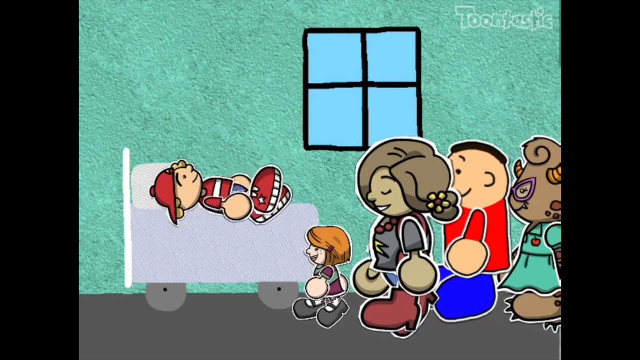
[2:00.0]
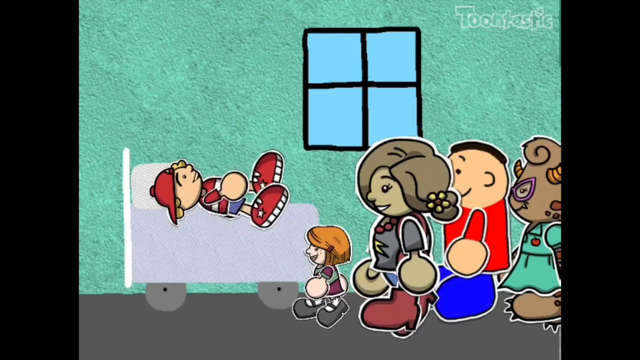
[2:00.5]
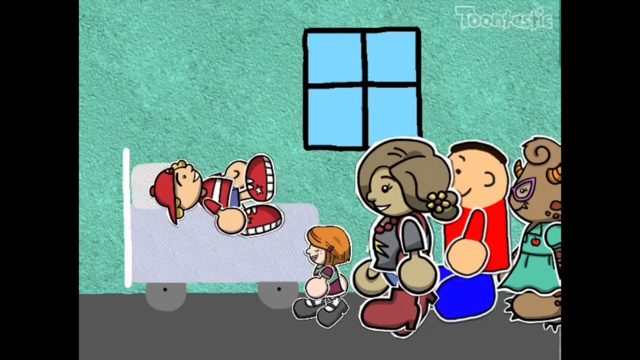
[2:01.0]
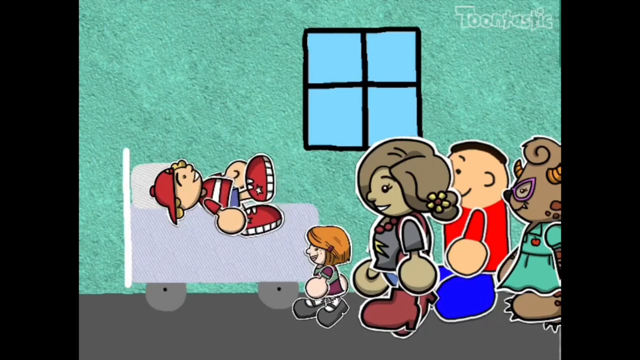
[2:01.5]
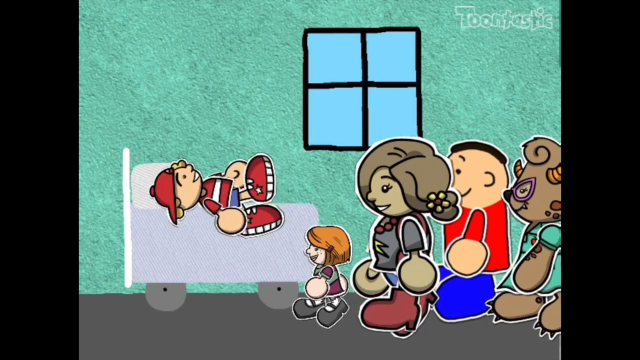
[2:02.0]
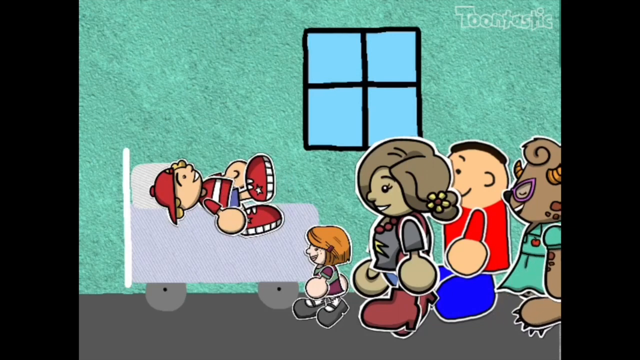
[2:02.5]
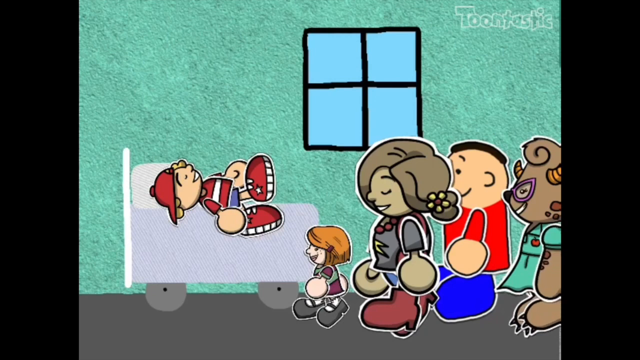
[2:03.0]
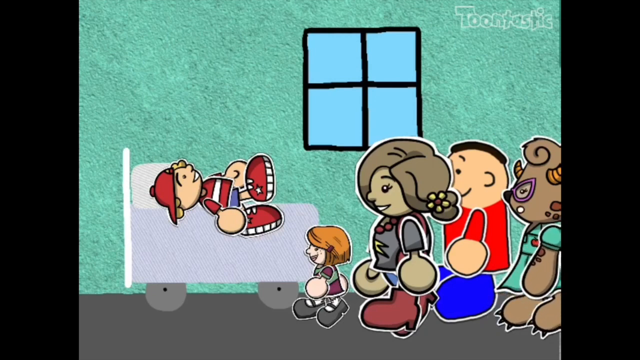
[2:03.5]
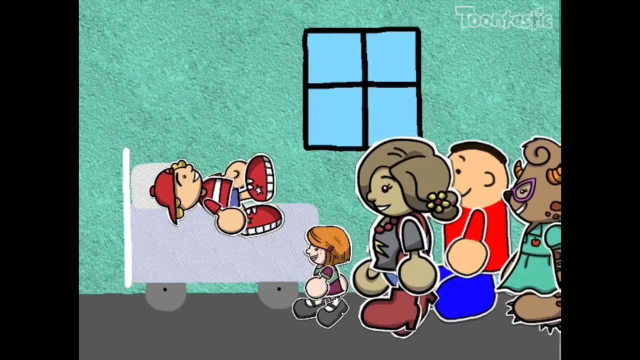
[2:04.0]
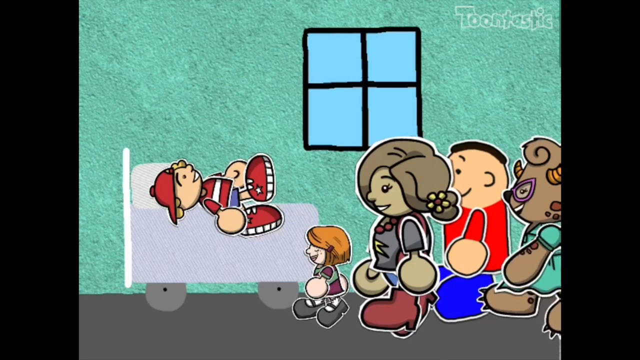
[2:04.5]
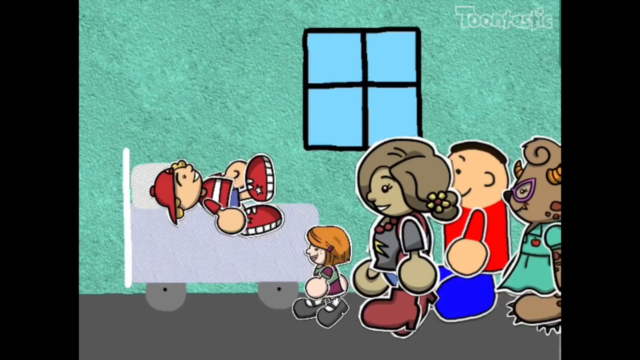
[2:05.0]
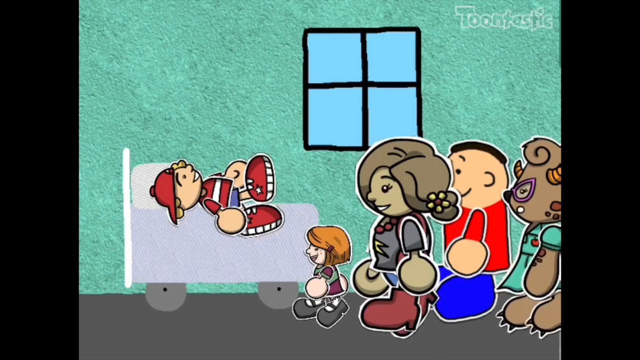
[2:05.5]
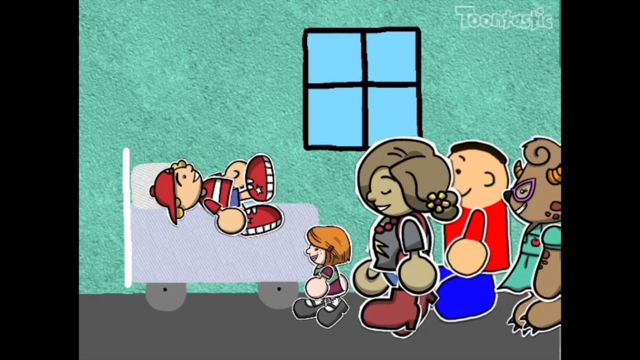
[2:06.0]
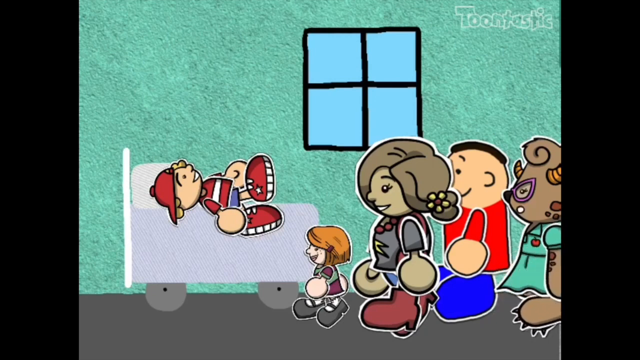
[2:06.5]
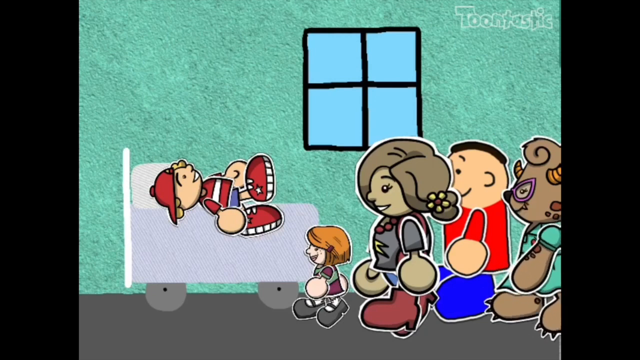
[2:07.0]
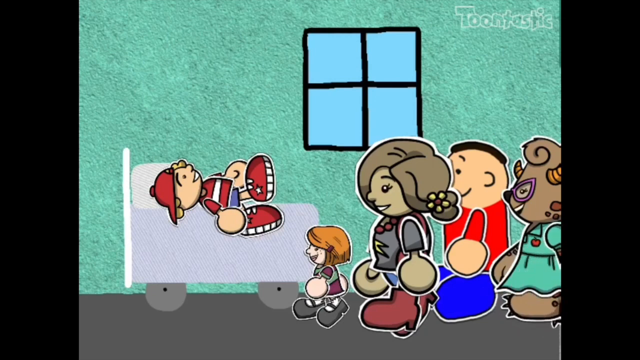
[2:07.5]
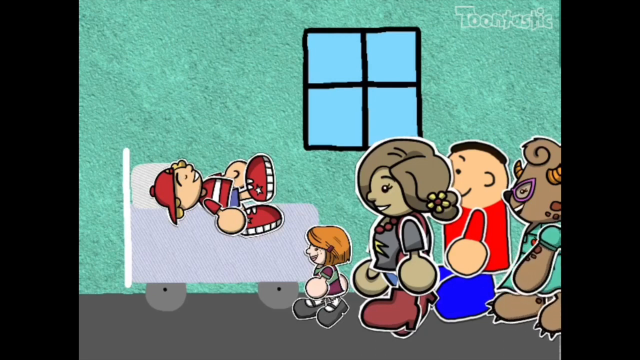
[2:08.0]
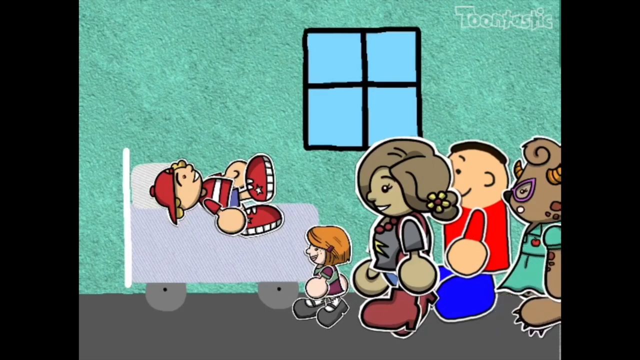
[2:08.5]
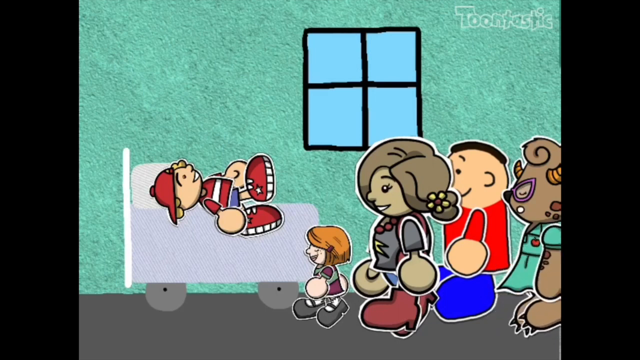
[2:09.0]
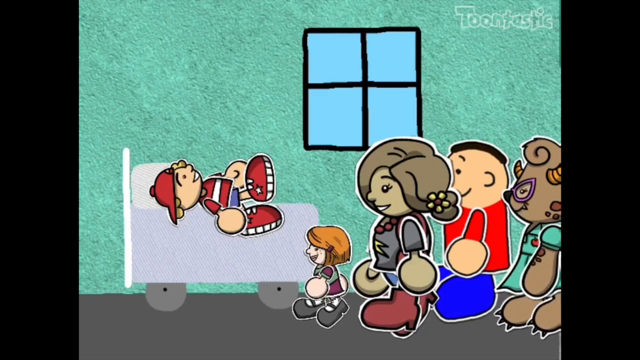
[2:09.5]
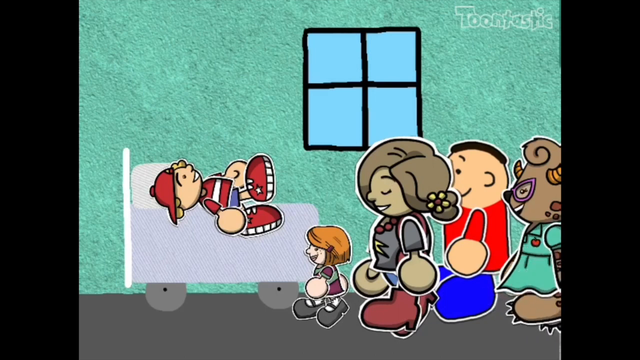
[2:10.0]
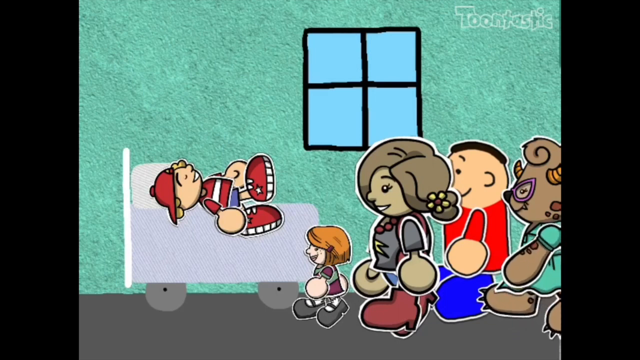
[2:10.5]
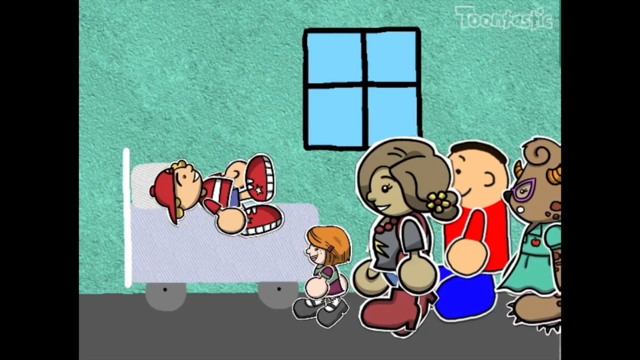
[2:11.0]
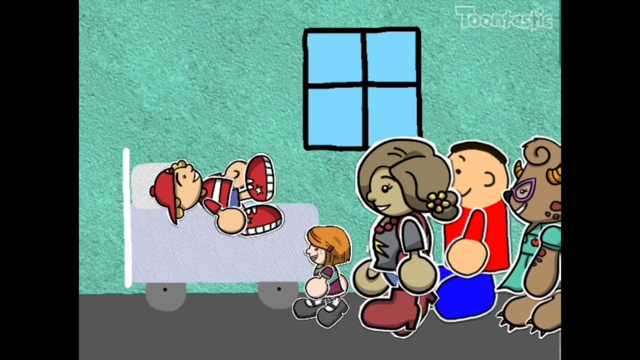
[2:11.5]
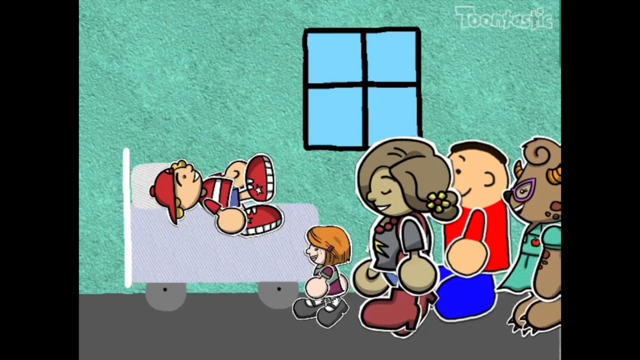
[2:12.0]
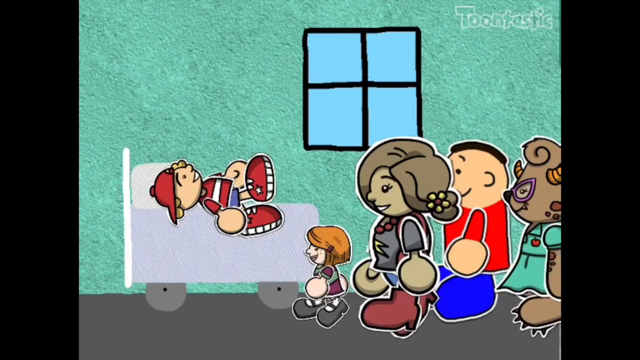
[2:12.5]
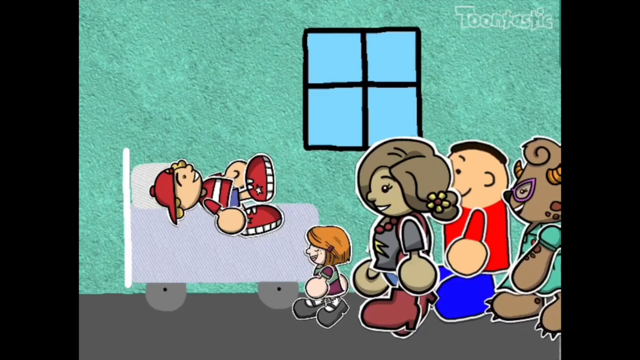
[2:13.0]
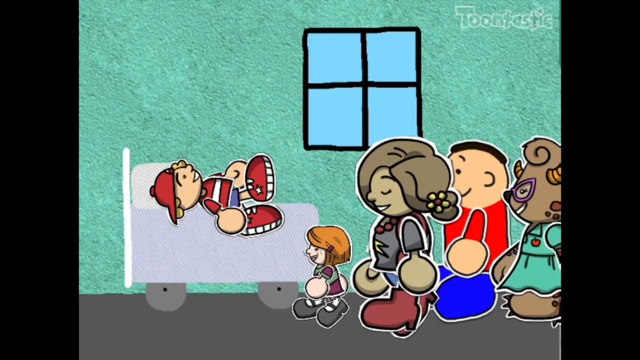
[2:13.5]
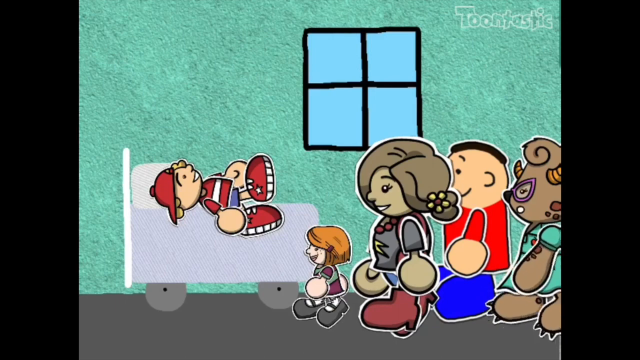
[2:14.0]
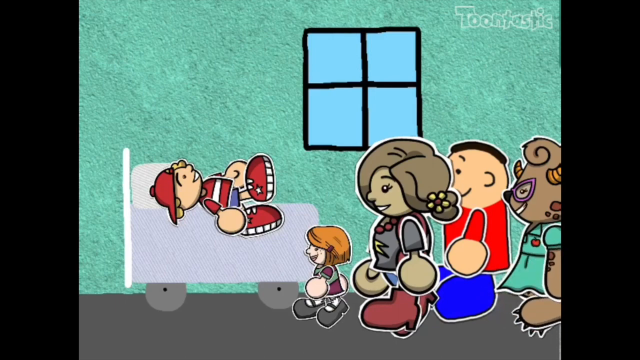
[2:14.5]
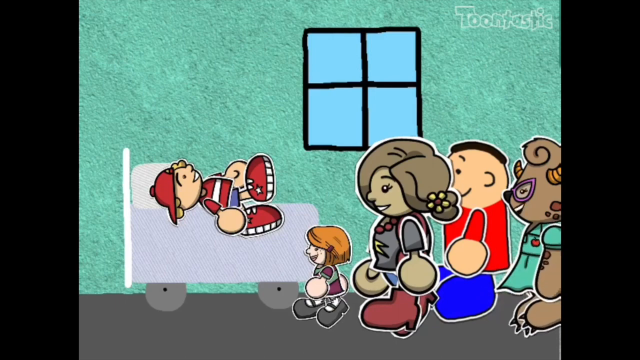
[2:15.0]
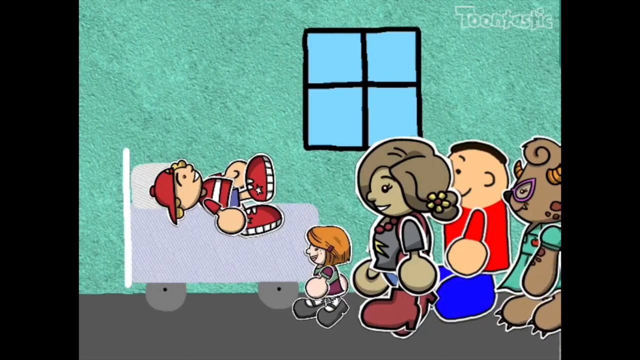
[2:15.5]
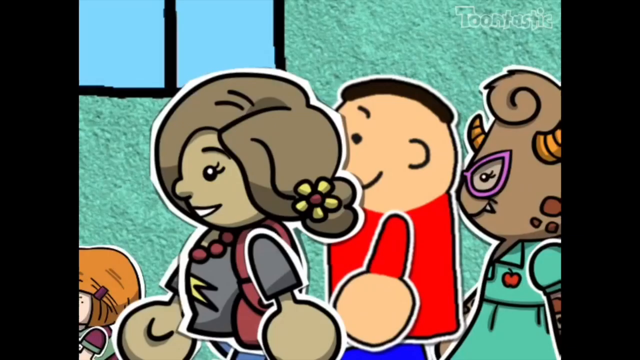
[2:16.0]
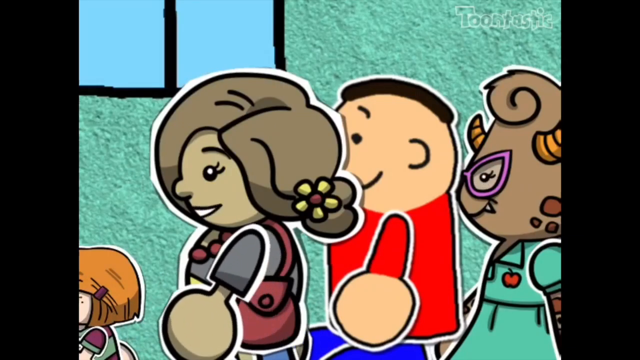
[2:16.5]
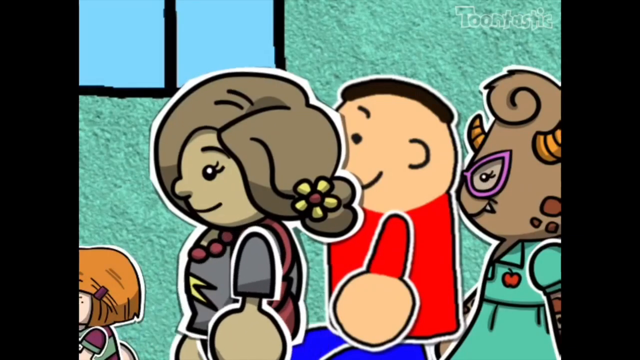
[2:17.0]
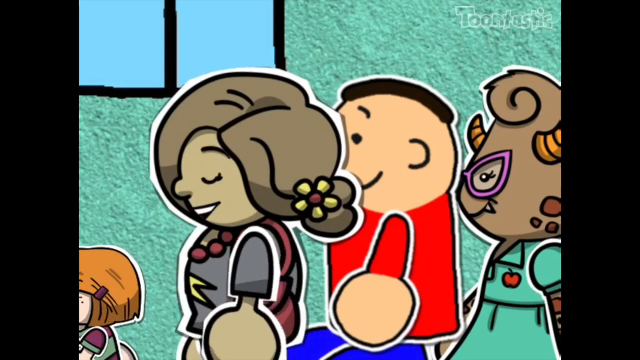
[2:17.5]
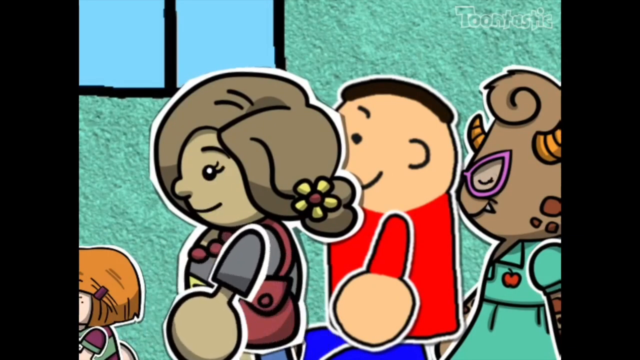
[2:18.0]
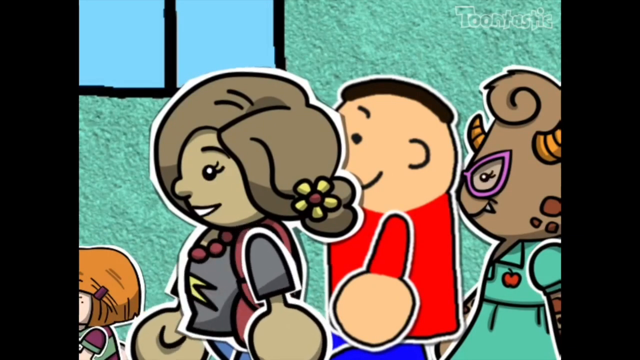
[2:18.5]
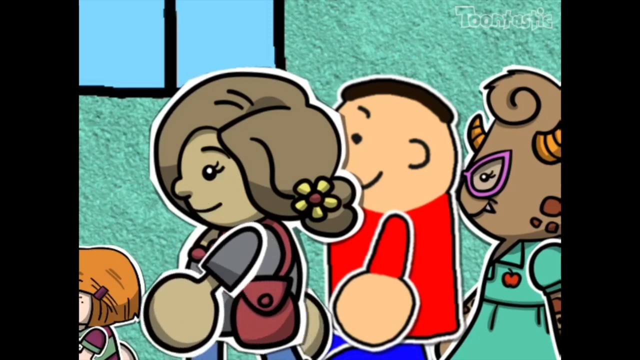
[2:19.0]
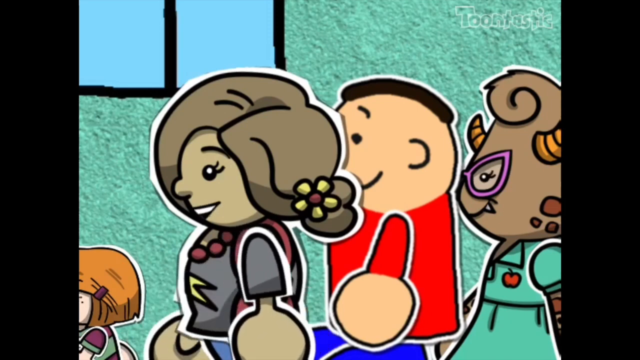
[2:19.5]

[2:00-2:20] The boy is in a hospital room, having been treated, and four friends visit him: three girls and a boy. The visiting boy wears a blue shoe, and one of the girls has wavy hair. The patient lies on a white hospital bed, talking with his friends and moving his hands, legs and eyes, appearing to get better. The visitors include the friend who called for the ambulance and two others not shown before.